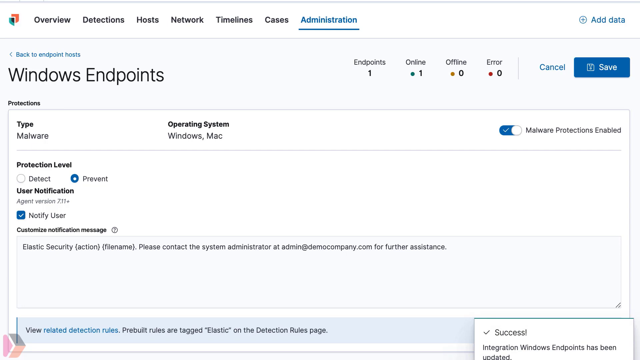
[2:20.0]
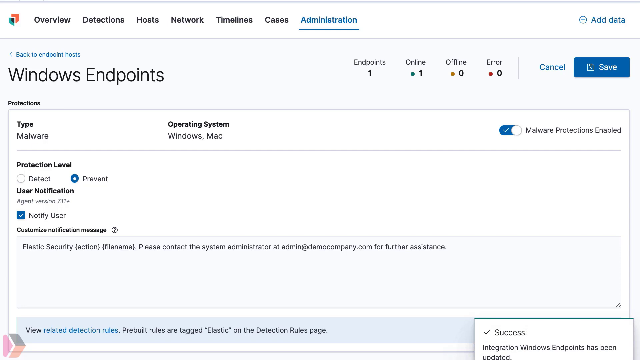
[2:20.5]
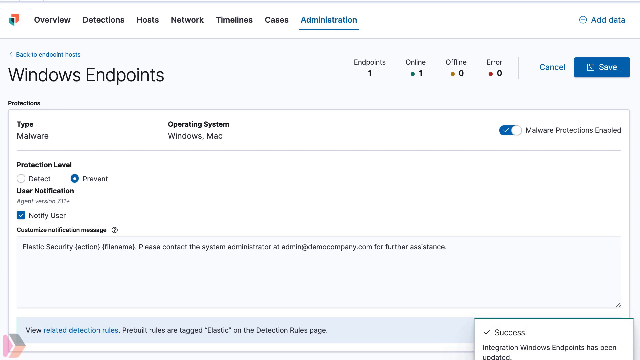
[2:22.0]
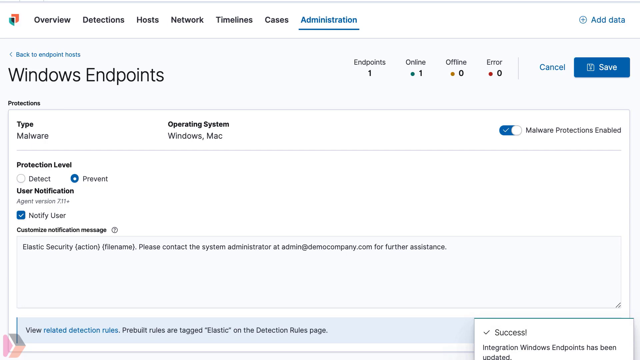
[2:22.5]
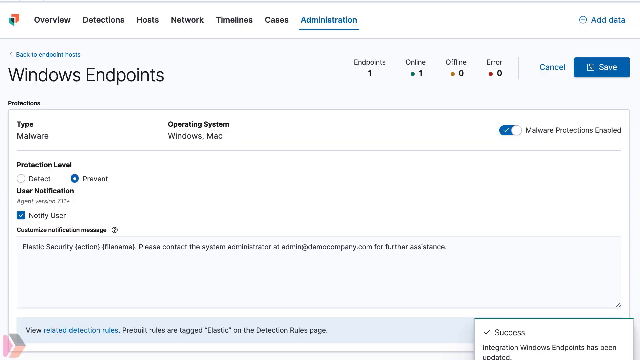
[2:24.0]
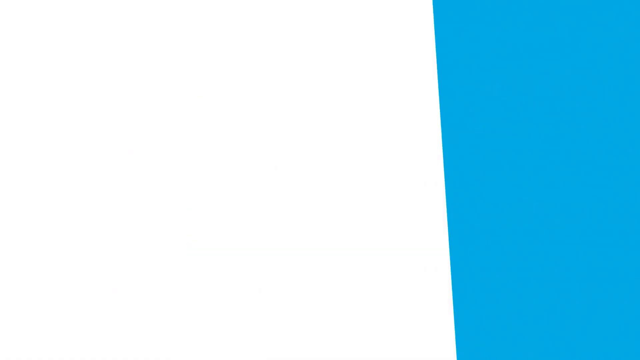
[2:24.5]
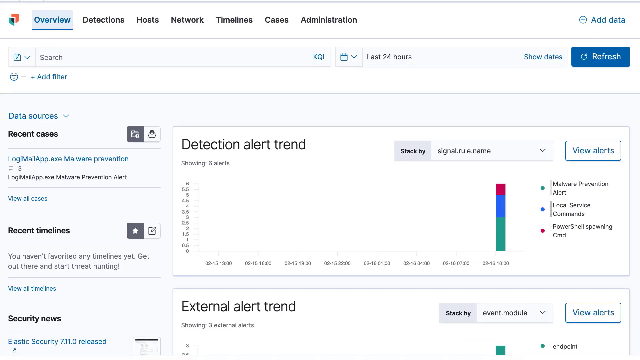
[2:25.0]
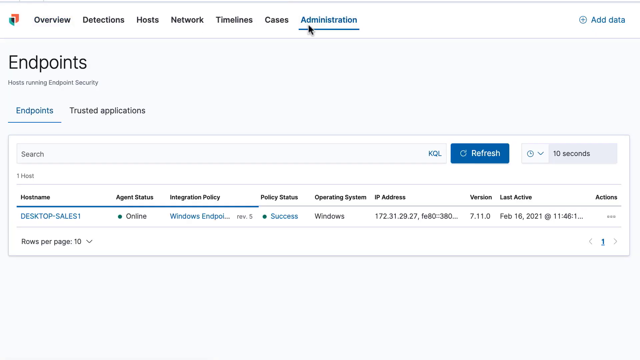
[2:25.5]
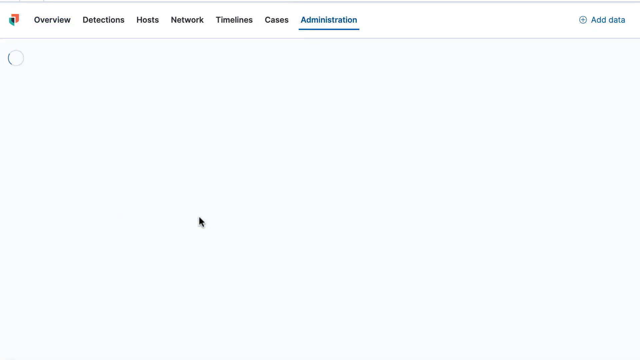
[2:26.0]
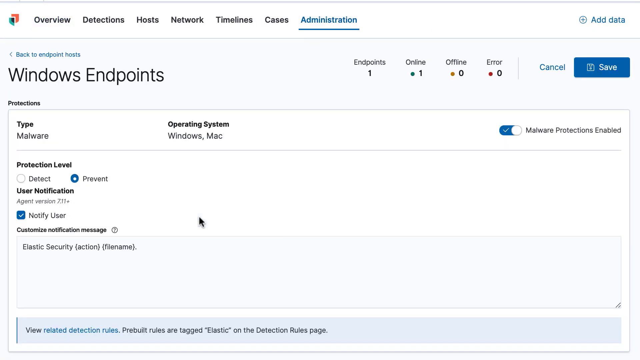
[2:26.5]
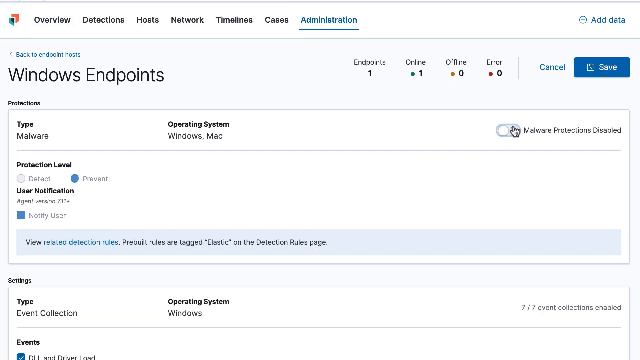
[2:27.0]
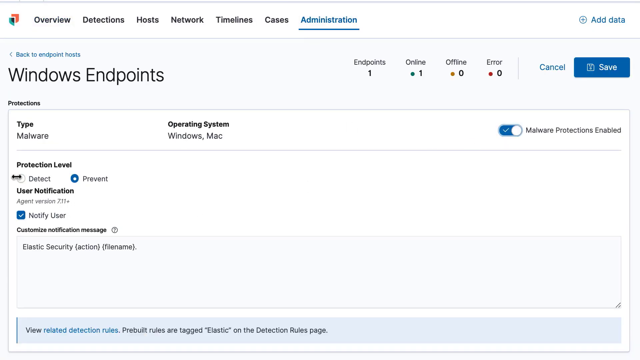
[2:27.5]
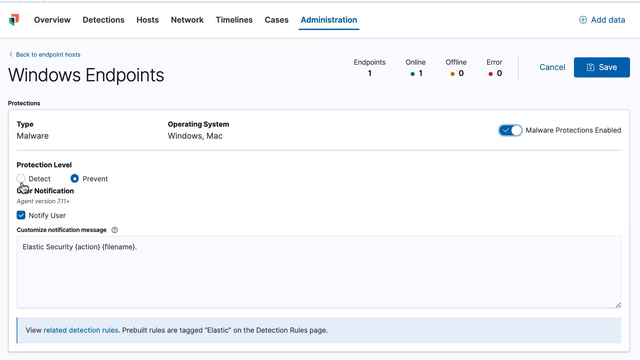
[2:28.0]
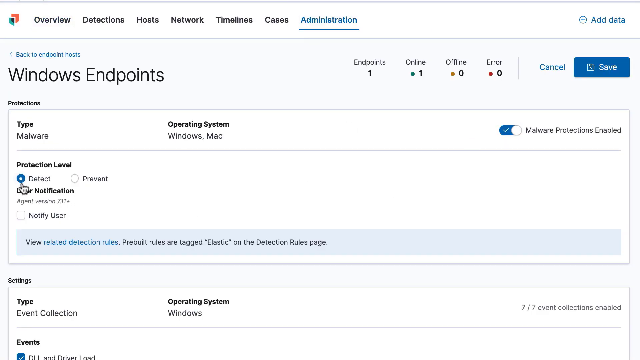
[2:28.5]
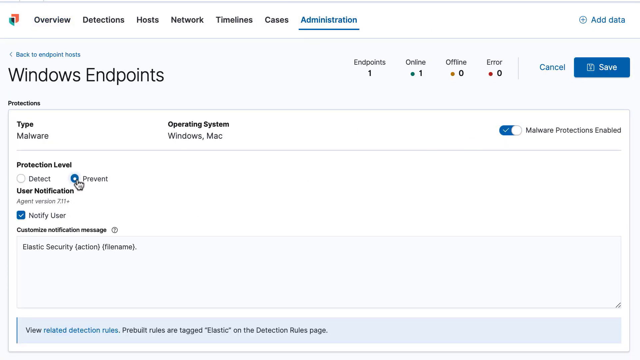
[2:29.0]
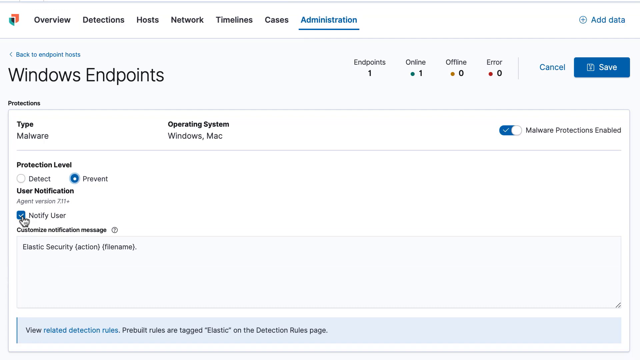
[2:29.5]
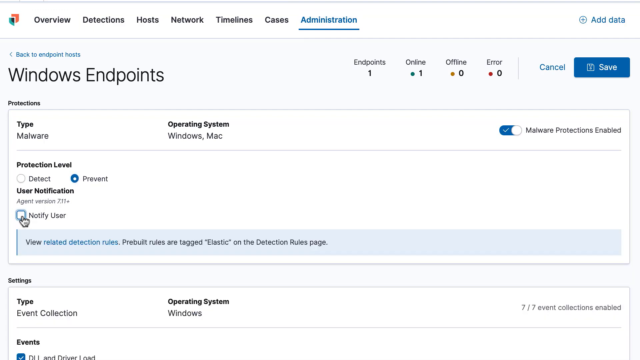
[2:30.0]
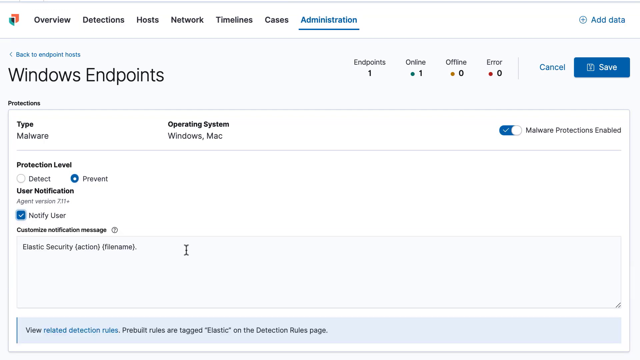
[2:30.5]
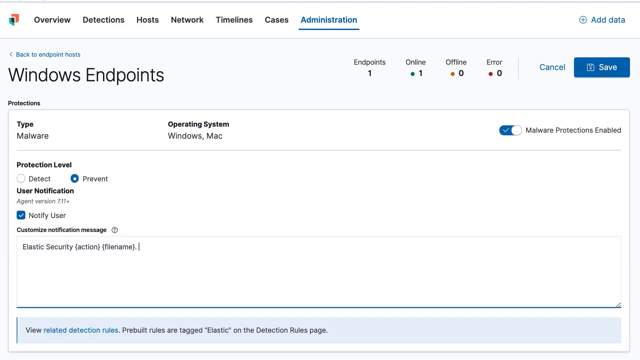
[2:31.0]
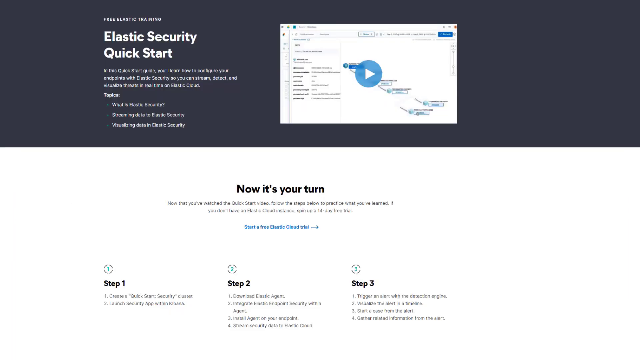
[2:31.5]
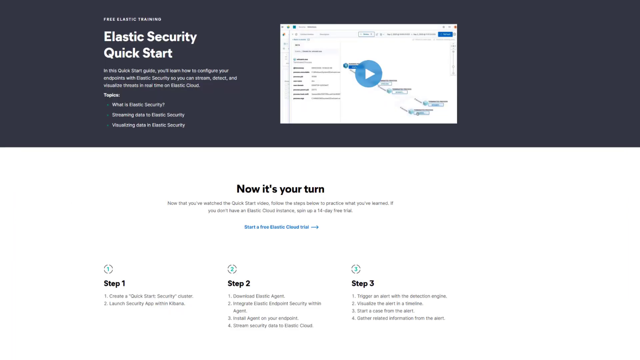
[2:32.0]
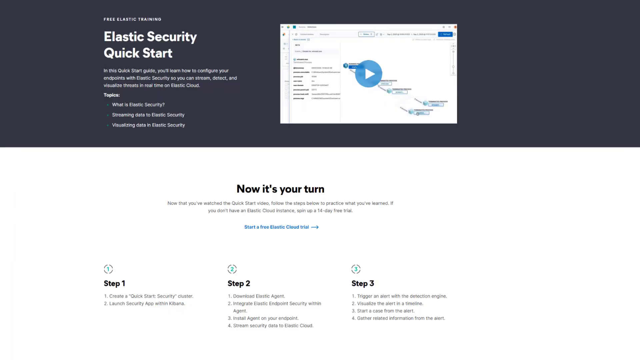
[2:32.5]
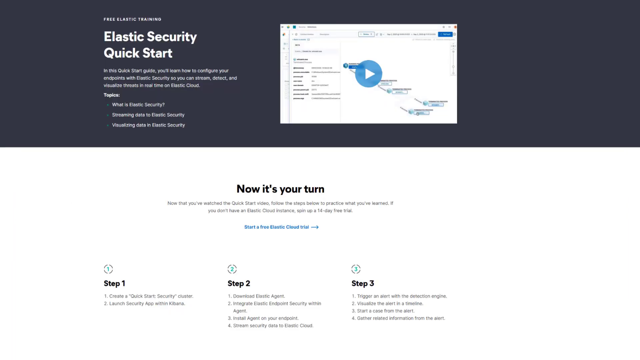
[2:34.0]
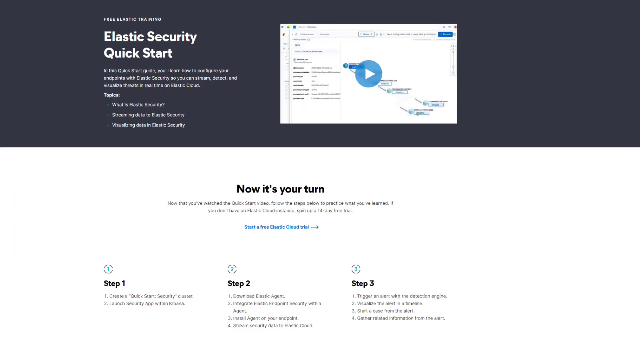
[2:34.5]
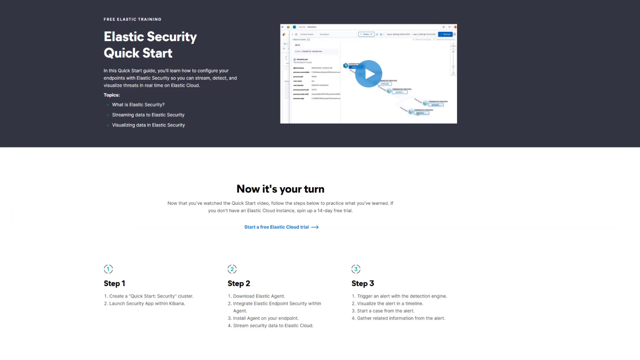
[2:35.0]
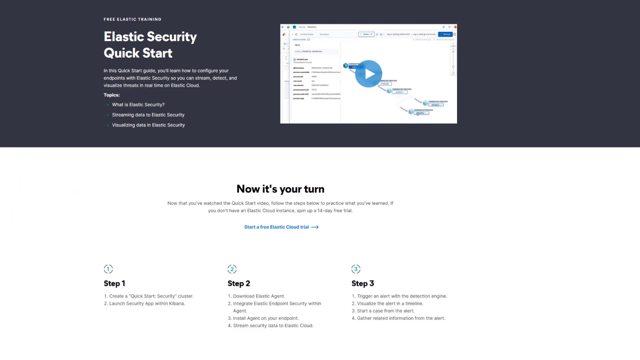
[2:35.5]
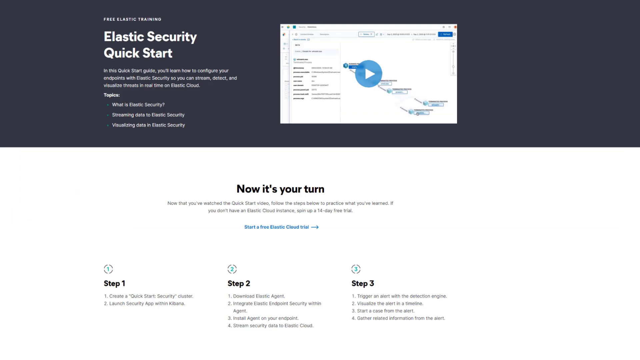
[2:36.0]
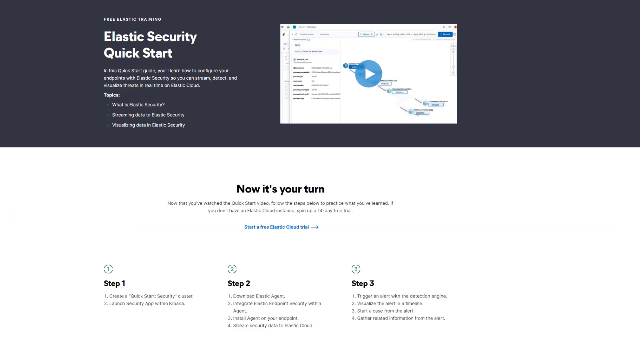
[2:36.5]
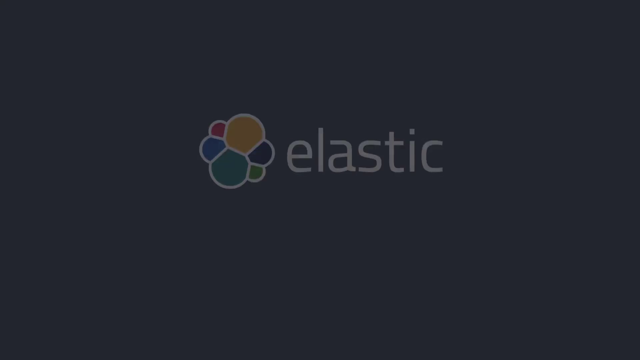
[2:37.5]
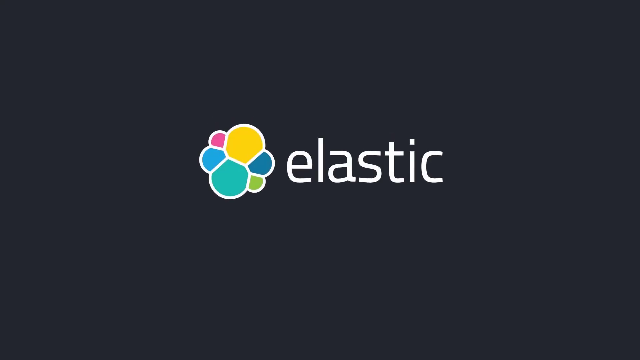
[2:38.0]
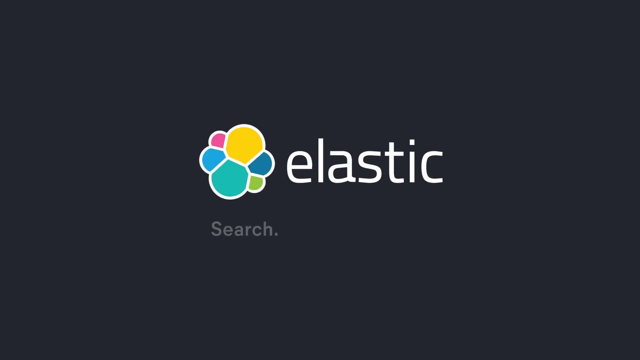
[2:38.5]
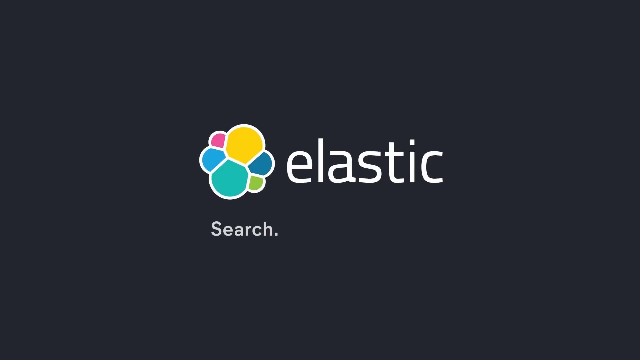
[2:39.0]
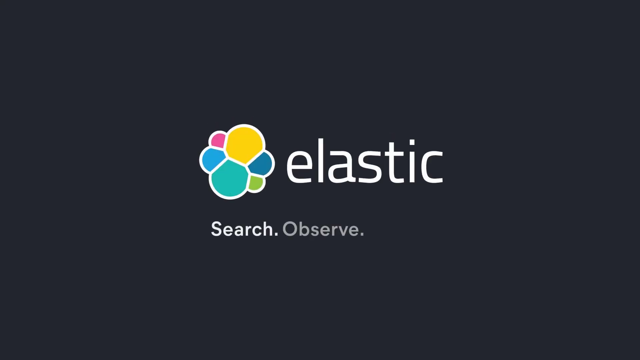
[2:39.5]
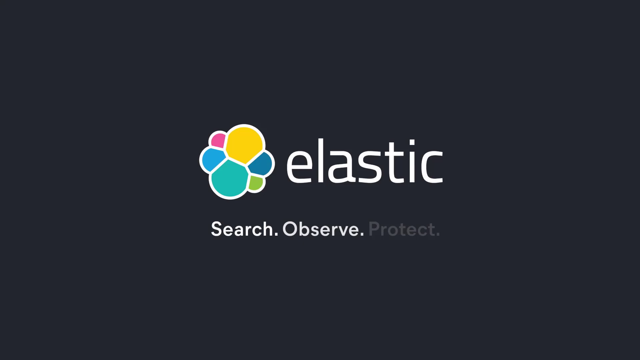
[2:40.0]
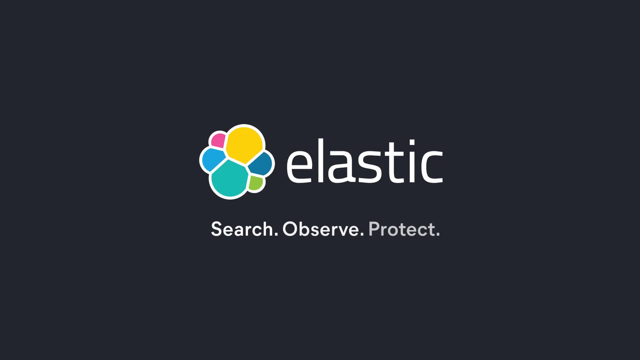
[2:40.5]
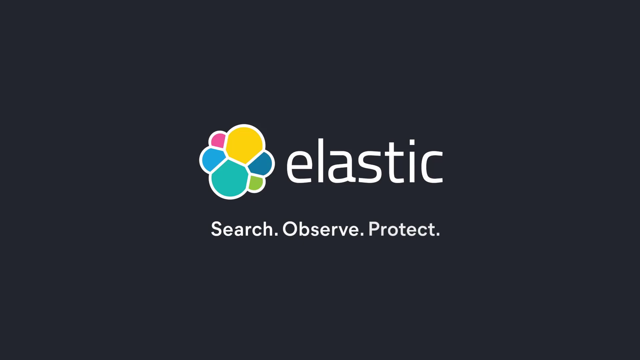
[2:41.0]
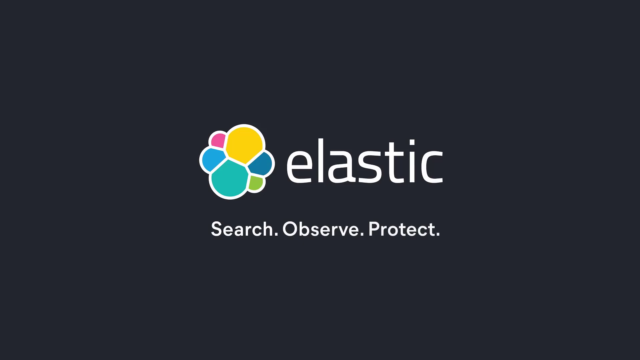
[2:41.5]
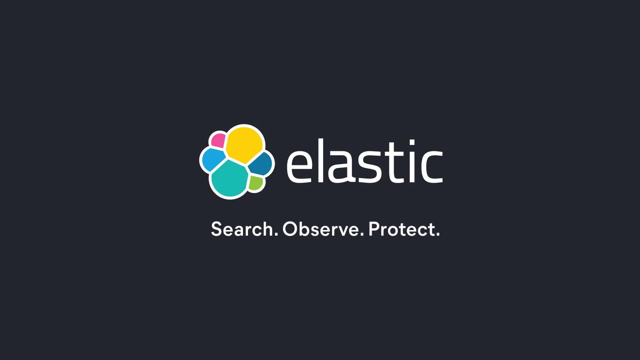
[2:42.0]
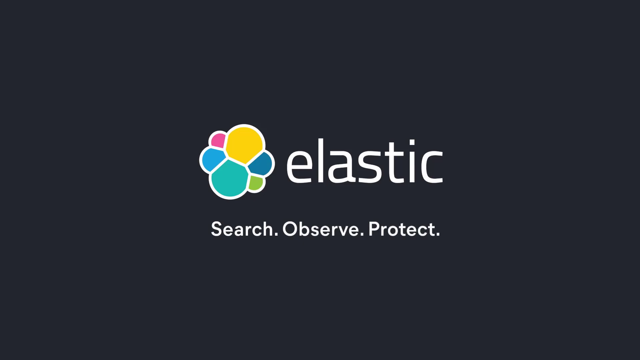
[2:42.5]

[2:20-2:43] In the top left corner of the page are overlapping orange and blue boxes beside the word "overview". Clickable tabs read overview, detection, host, network, timeline, cases and administration. Administration is blue and underlined like a hyperlink, with "plus add data". "Endpoint" has very small words under it: "host, running endpoint security". Below that, "endpoints" is a blue underlined hyperlink, with "trusted applications" beside it. A long rectangular box with the word "refresh" is highlighted in blue, and beside it is "10 seconds". Another box has a dropdown. There is a search bar with "one" in it. Underneath, the host name is "desktop sales one". Next is agent status, showing "online" with a bluish green dot. The integration policy is "Windows XPoint", the policy status is active success, and the operating system is Windows. The address is 172.31.29.27.FE80/380, version 7.11.0, dated February 16, 2021, at 11:46.